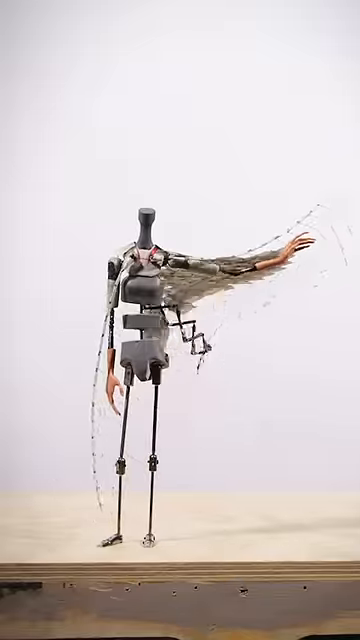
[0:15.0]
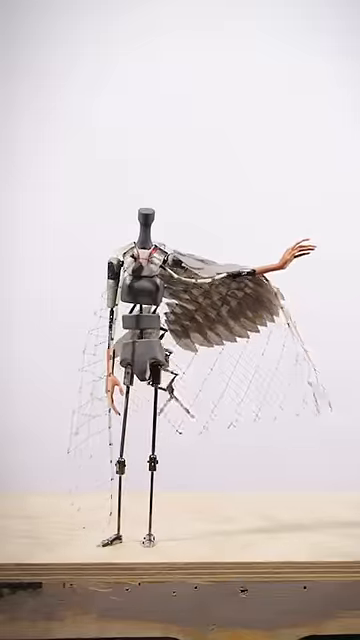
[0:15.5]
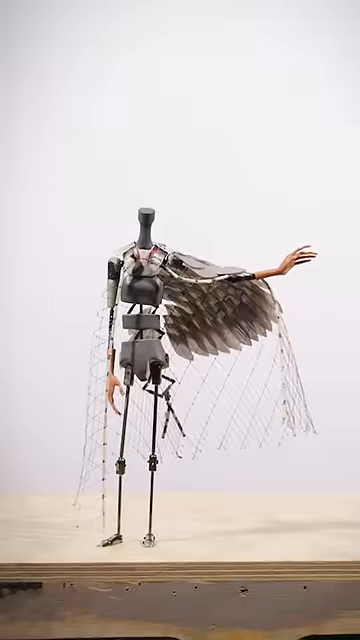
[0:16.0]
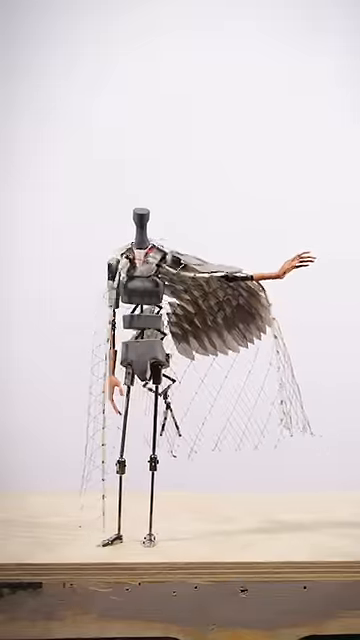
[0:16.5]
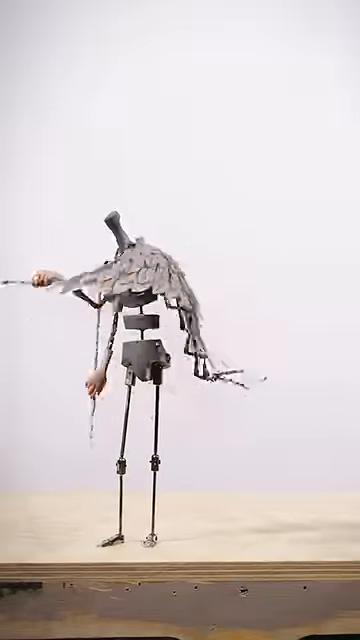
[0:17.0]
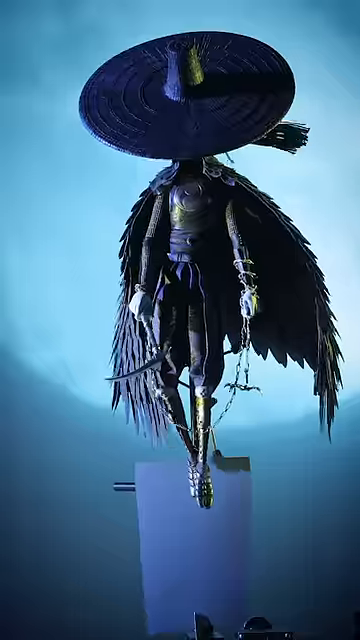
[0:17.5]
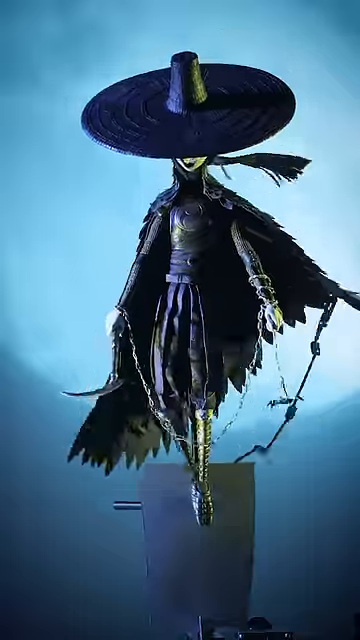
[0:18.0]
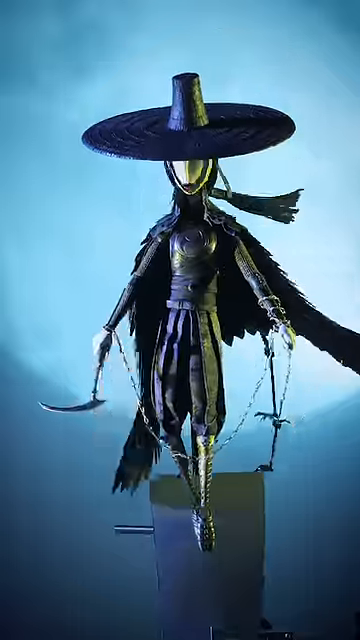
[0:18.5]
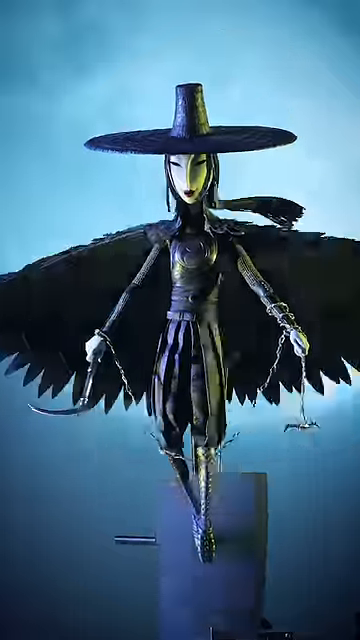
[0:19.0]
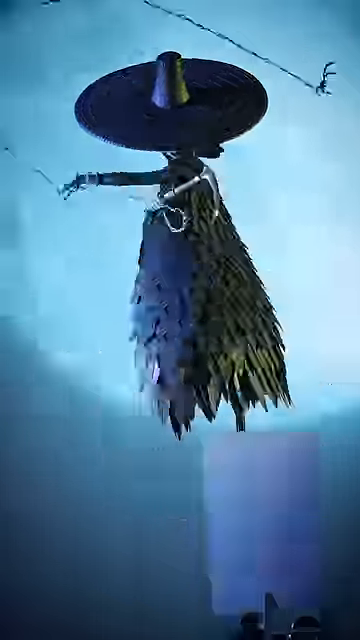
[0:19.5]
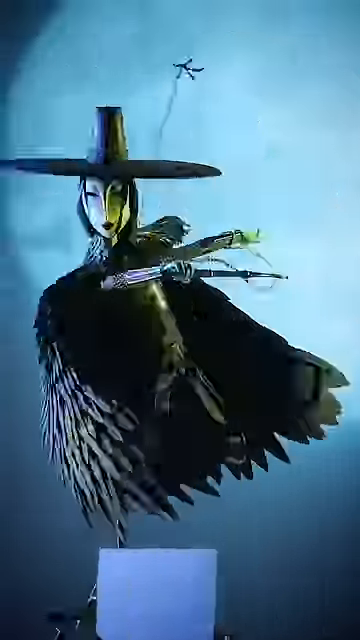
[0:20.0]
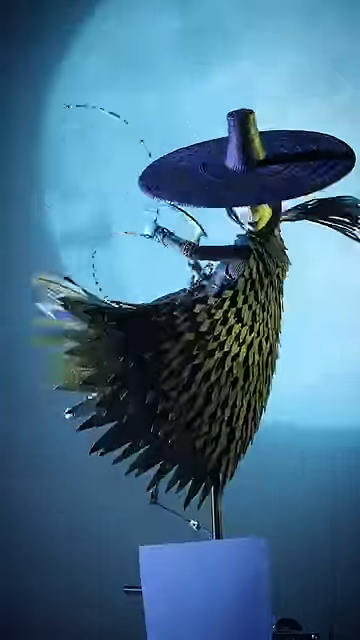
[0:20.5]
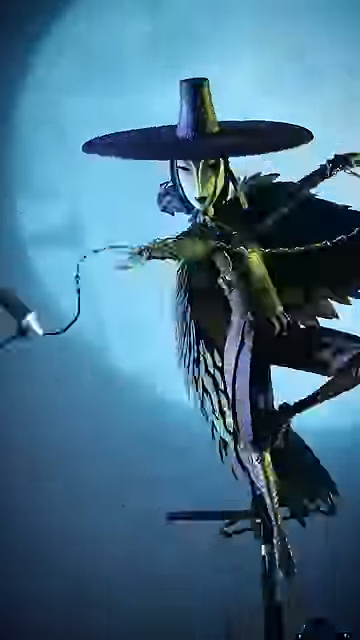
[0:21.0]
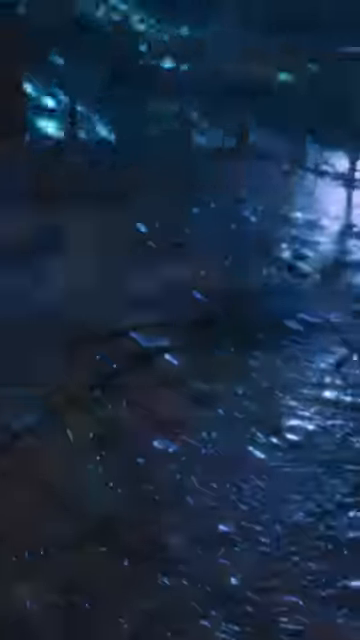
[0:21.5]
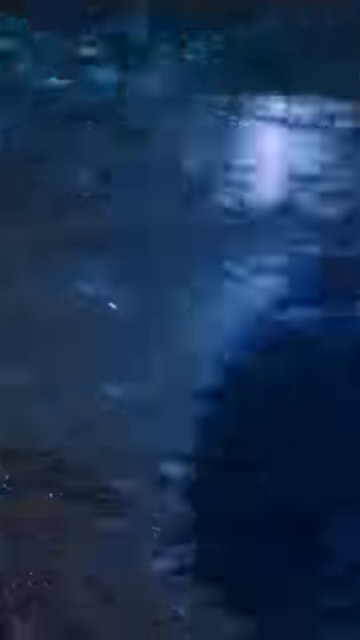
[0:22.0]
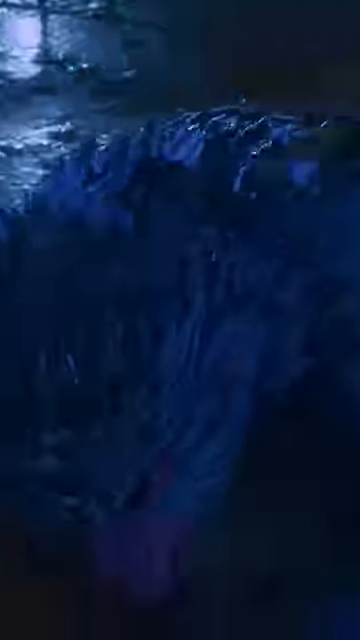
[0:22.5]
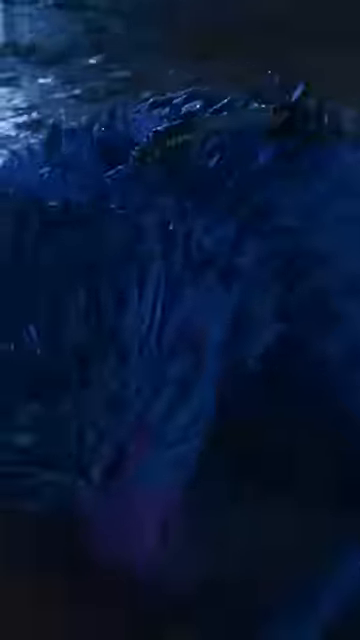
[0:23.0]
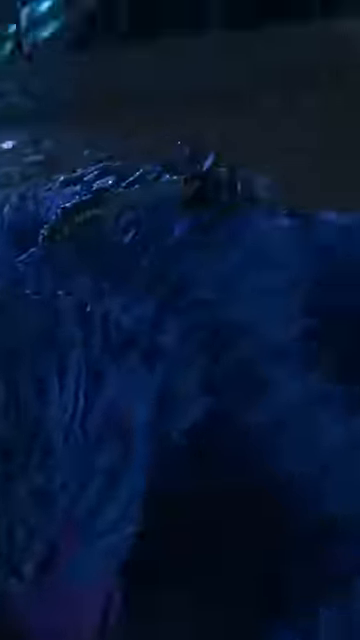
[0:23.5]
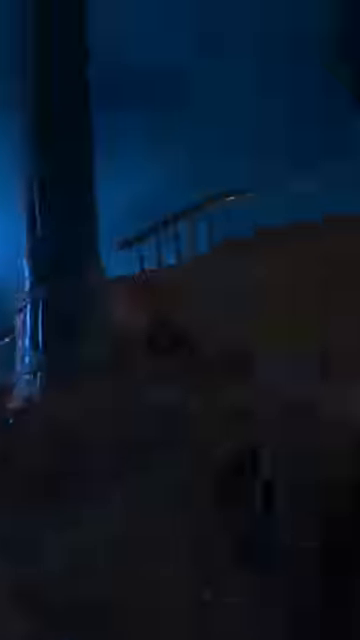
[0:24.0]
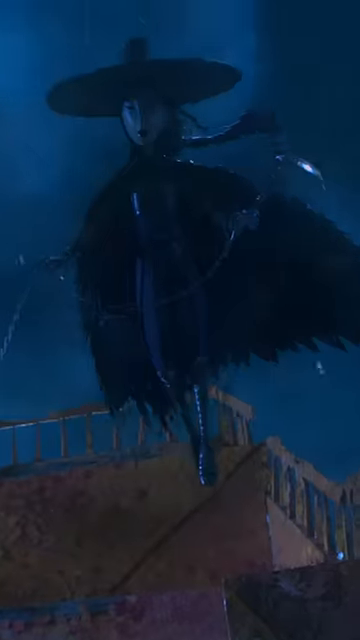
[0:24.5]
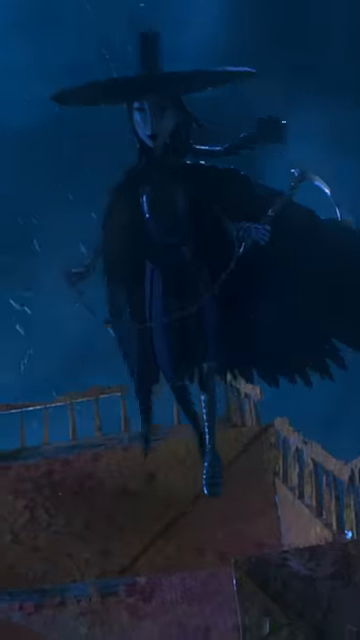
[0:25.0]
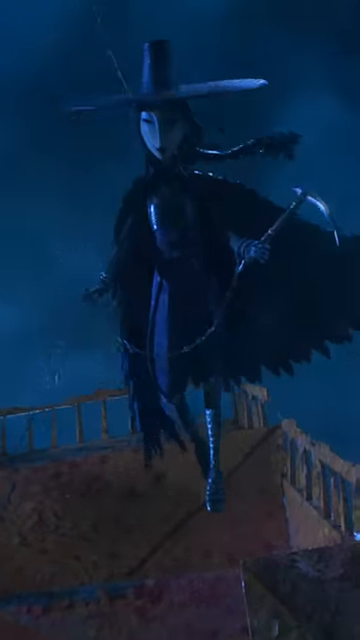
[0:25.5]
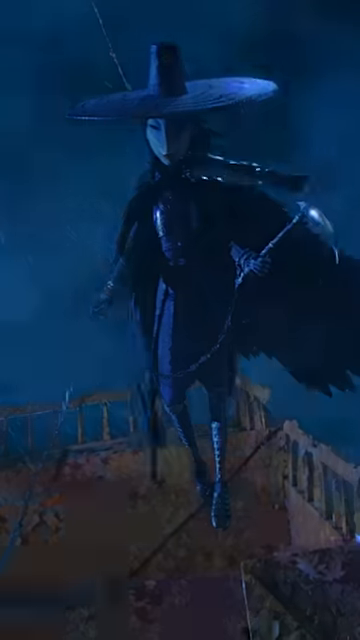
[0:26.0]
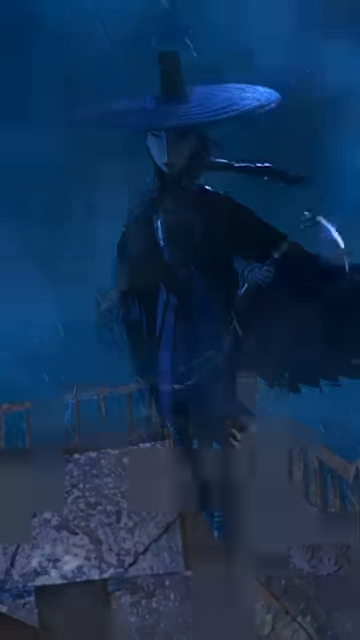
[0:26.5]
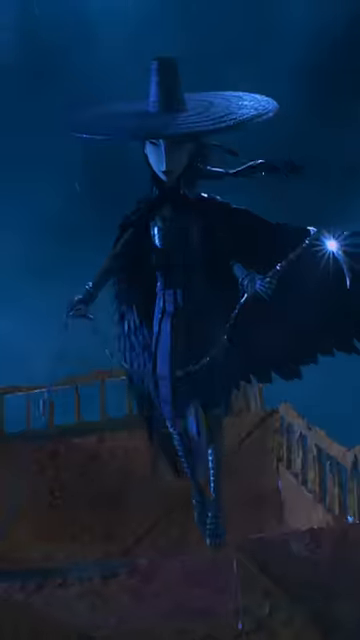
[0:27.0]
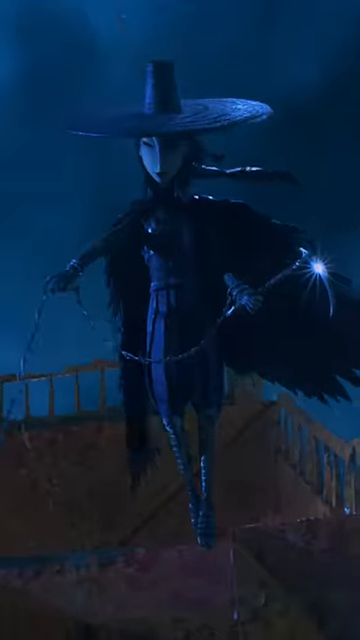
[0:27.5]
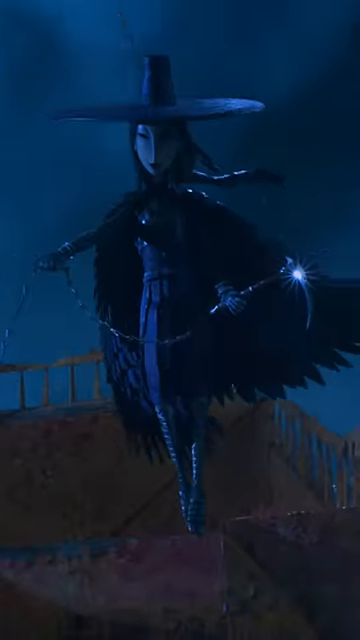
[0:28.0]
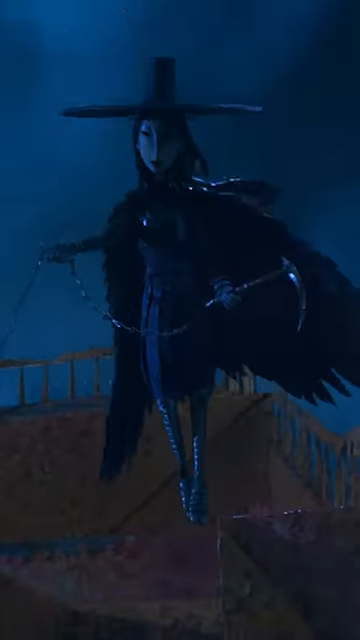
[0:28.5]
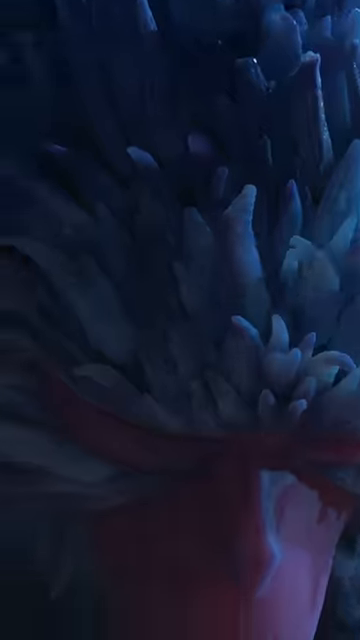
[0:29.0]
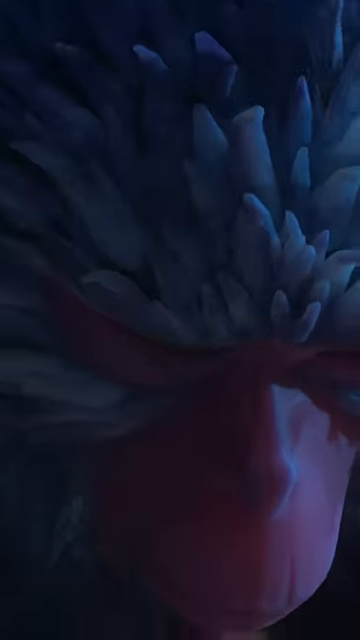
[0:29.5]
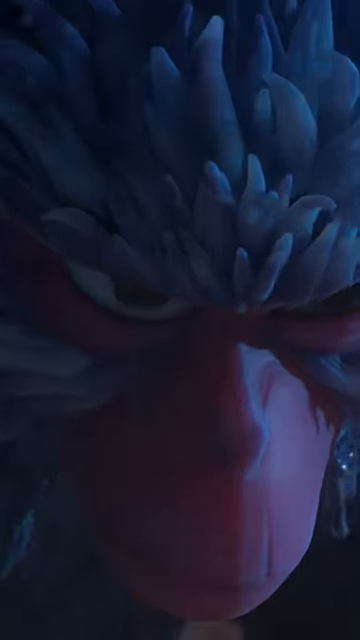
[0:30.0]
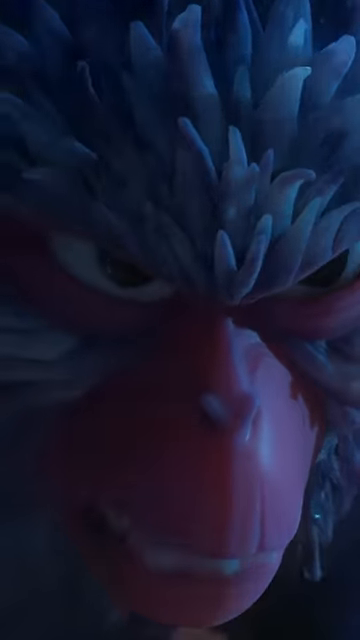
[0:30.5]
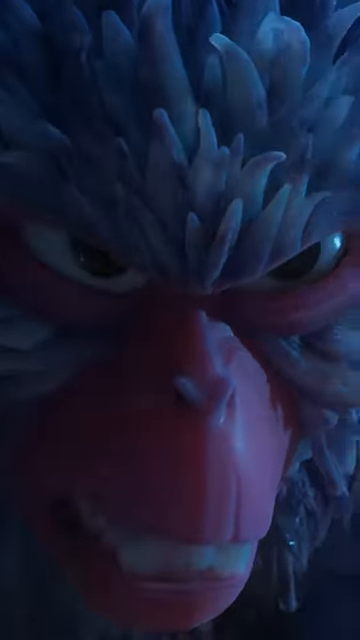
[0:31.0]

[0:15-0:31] The same headless body extends its left arm out to its side. The scene transitions back to the witch, who continues to seemingly float around. She whips around a rope, or possibly a weapon, spins around and flings it toward something. A night view shows a creature that looks furry, down on the ground. The view pans up to the witch, who floats in midair looking down at it while still holding the weapon. There is lightning and rain, making it a stormy night. She looks down at the creature with a serious look on her face, and the creature starts to look up toward her in a close zoom on its face. It looks like some sort of primate, maybe a baboon, and it slowly looks up toward the witch with an angry expression.